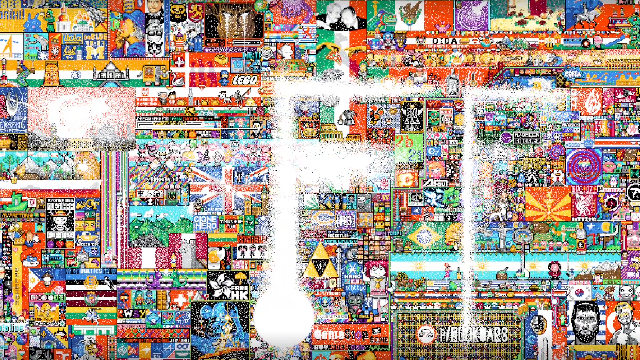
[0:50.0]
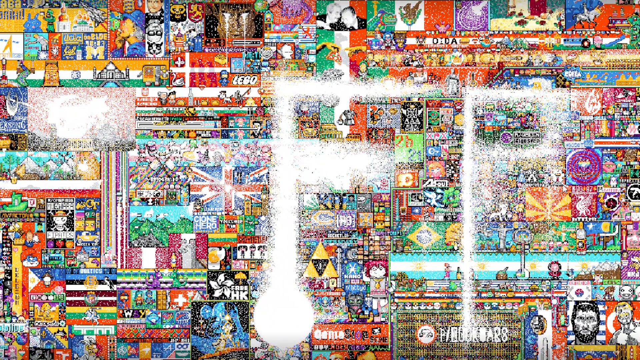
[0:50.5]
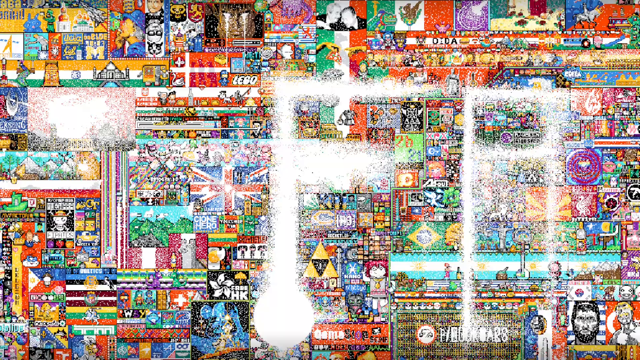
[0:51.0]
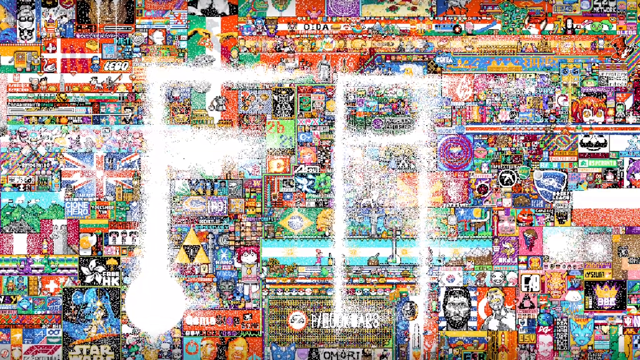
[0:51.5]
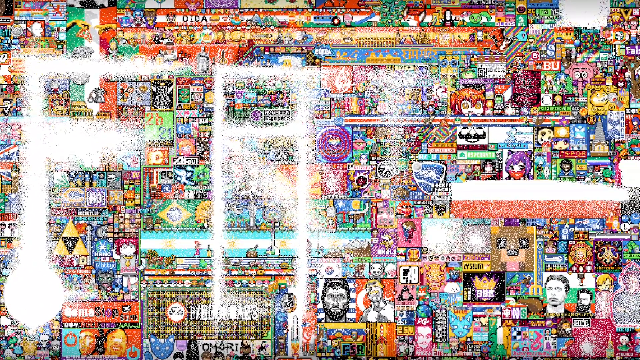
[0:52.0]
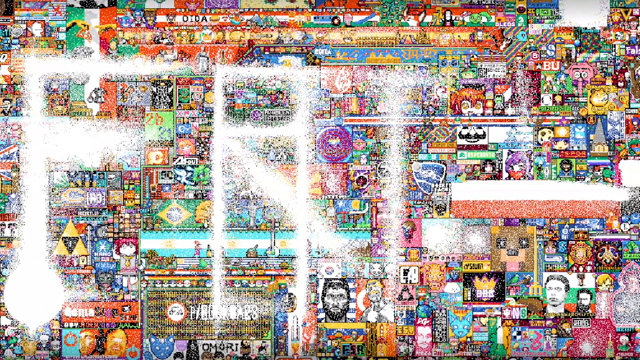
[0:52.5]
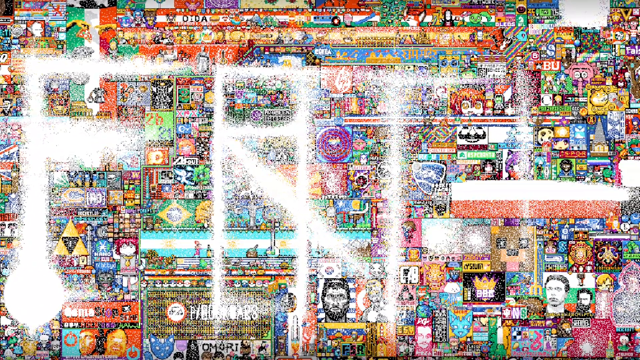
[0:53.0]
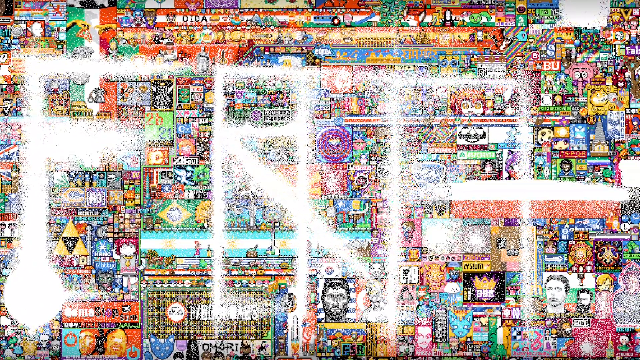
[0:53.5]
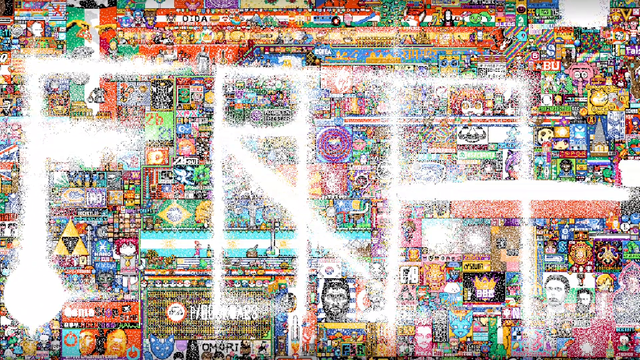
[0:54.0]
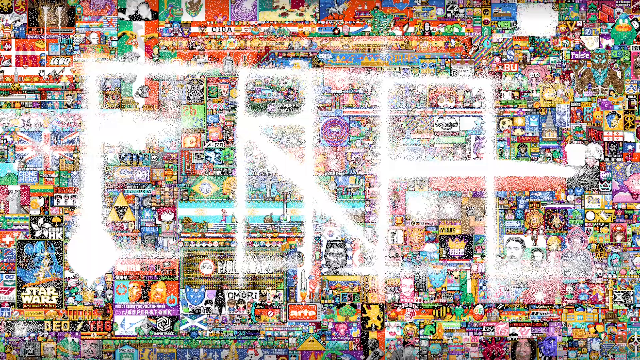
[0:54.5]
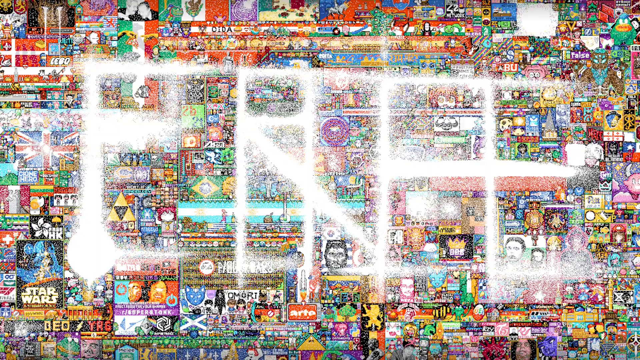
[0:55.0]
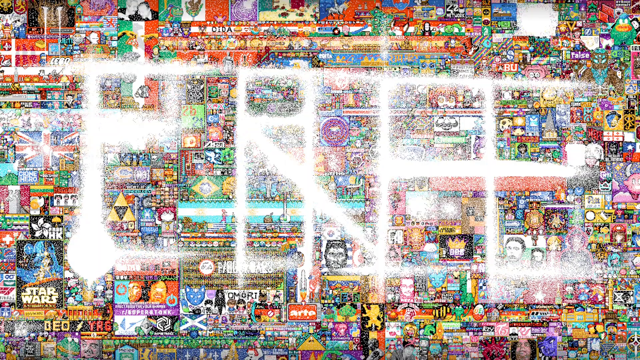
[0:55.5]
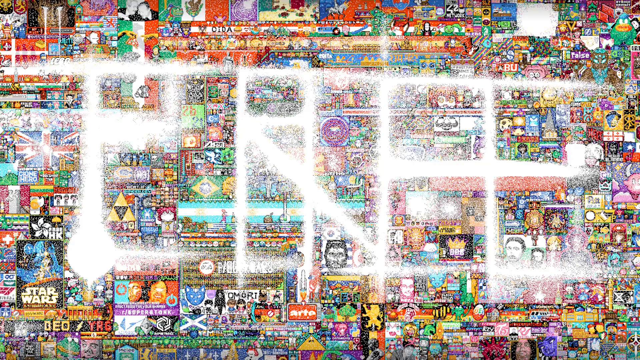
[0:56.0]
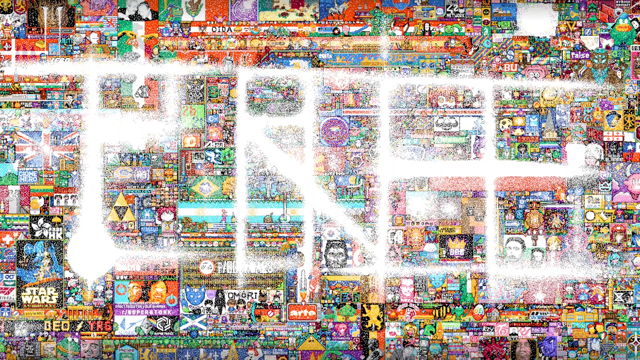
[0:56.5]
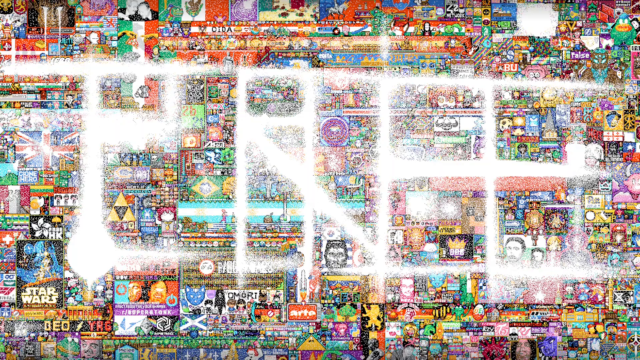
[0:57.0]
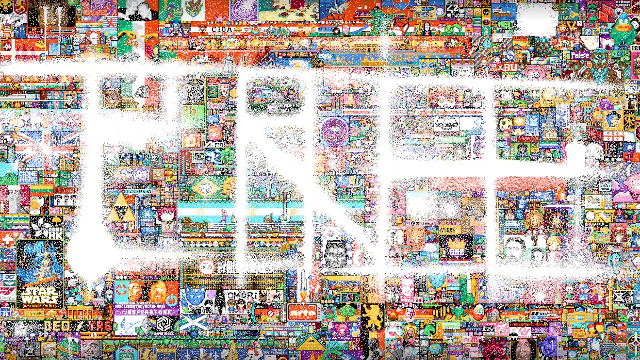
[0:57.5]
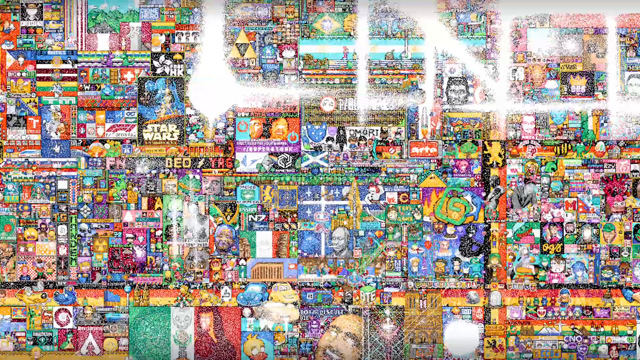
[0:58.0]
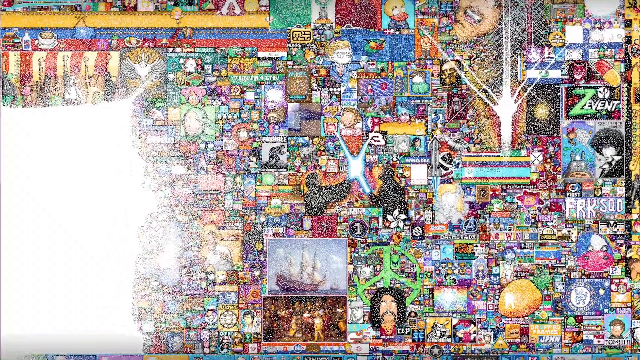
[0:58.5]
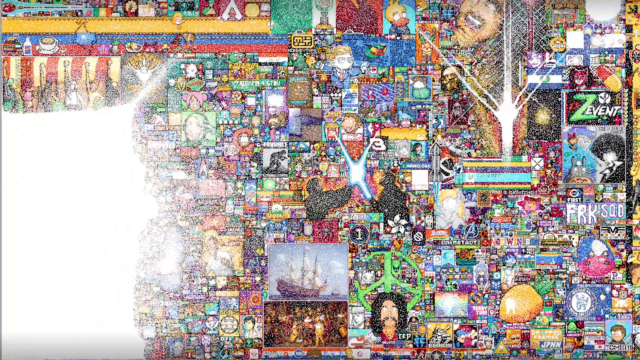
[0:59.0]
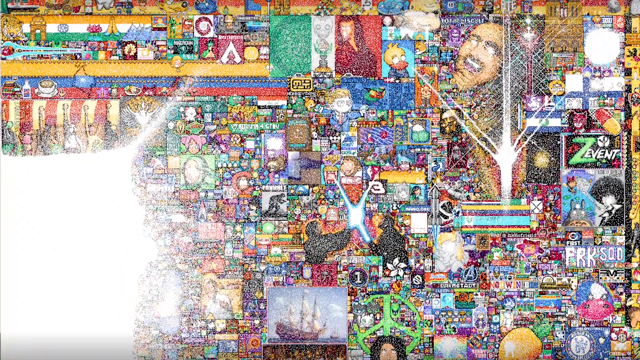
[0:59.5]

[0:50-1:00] A different section appears, featuring Lego. There is a Topgolf logo, the Greece flag, and some things disintegrating. The Italy flag appears, along with the Lego logo with Mega Man right next to it. There is the famous picture of two hands touching, like God's, but with a piece of Sicilian or Napoleon pizza. "Free Hong Kong" appears in black. A Turkish man is right next to the Greek man in the flag. The Taiwan flag and the Brazil flag are also visible.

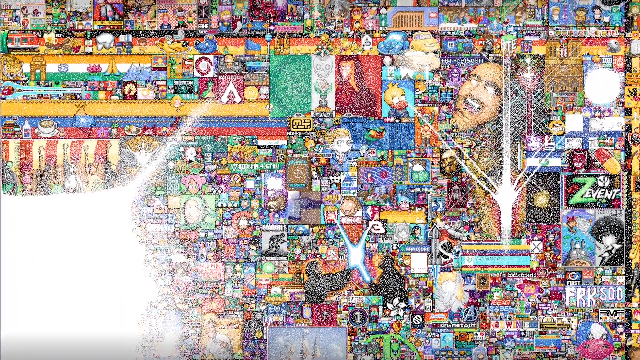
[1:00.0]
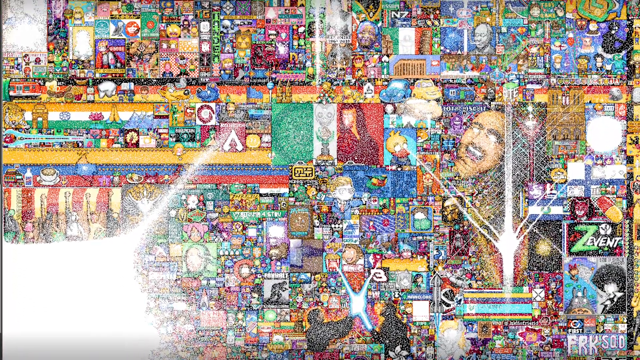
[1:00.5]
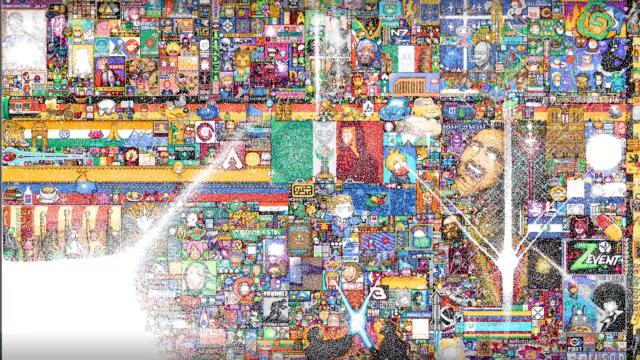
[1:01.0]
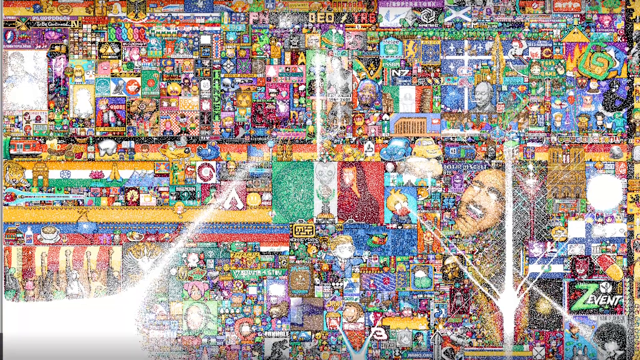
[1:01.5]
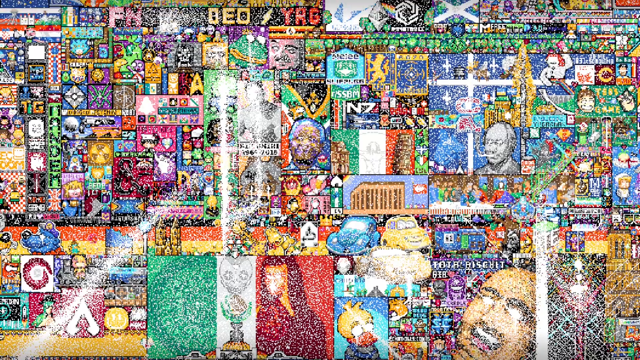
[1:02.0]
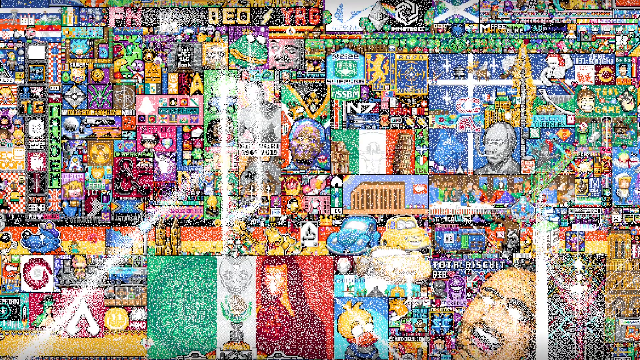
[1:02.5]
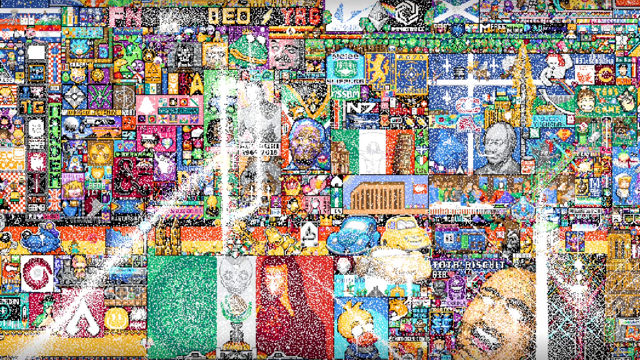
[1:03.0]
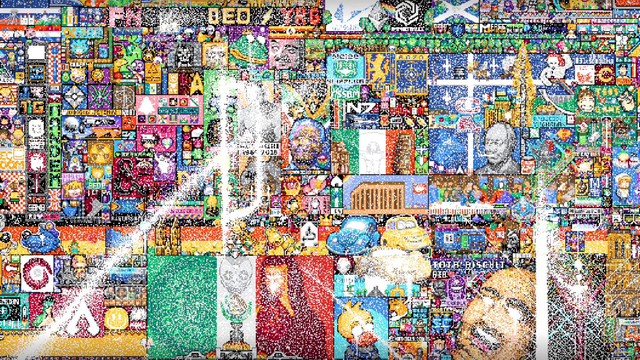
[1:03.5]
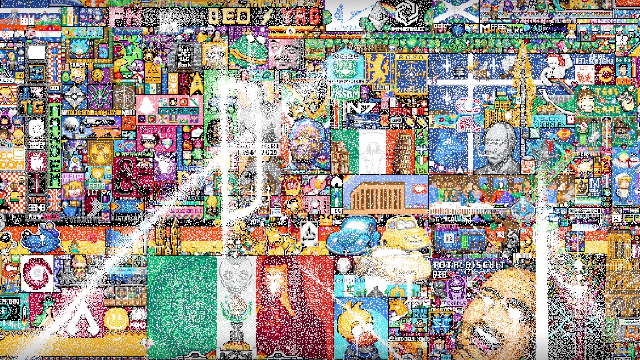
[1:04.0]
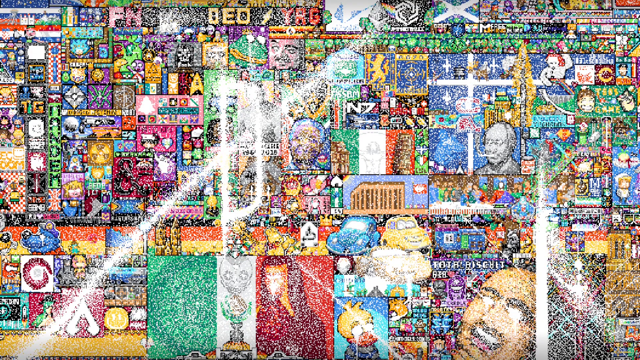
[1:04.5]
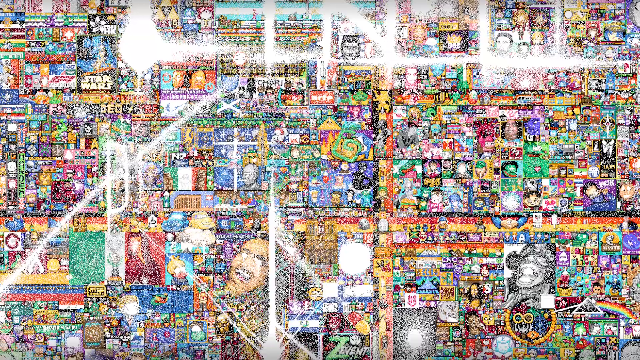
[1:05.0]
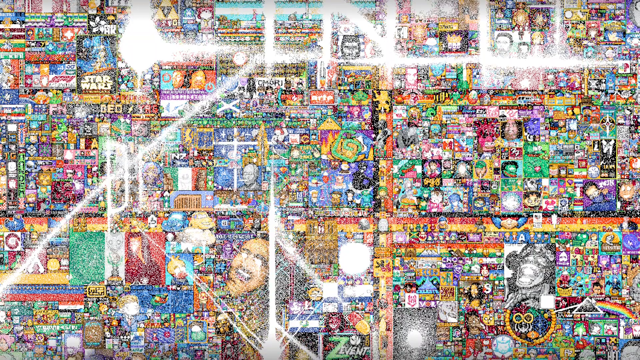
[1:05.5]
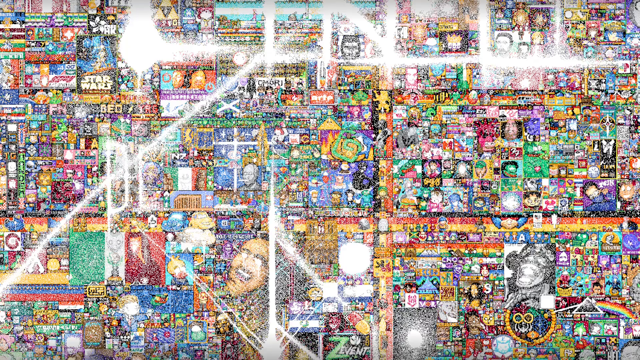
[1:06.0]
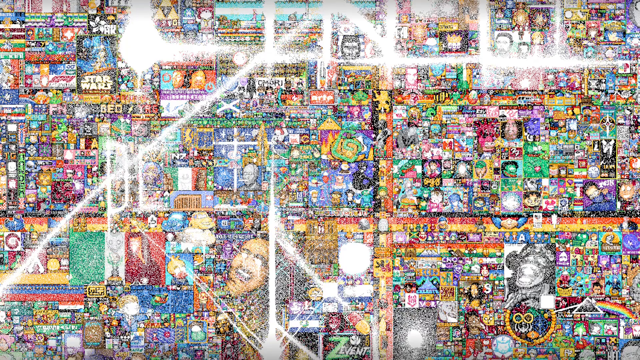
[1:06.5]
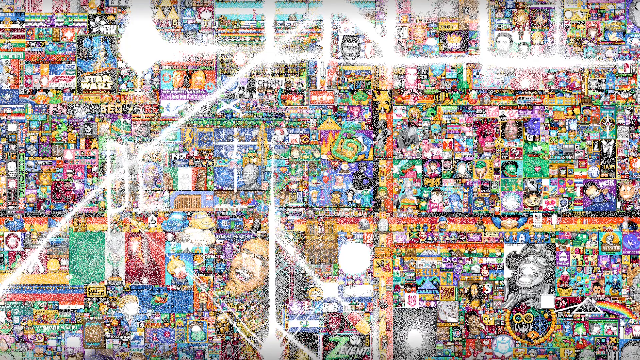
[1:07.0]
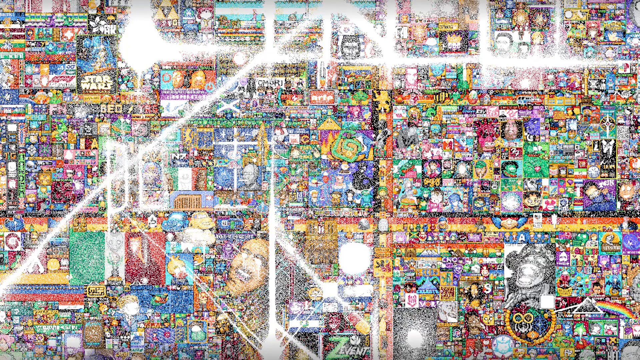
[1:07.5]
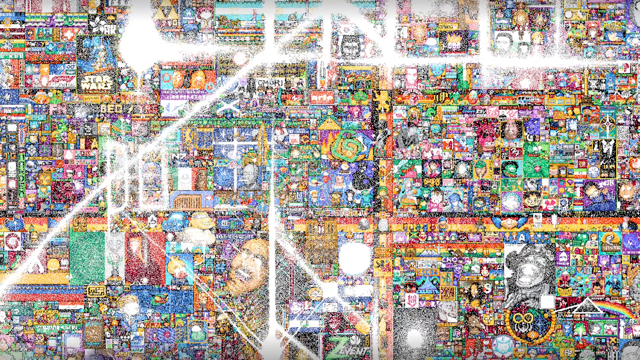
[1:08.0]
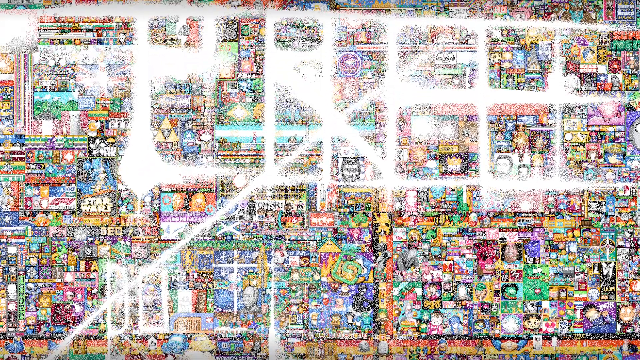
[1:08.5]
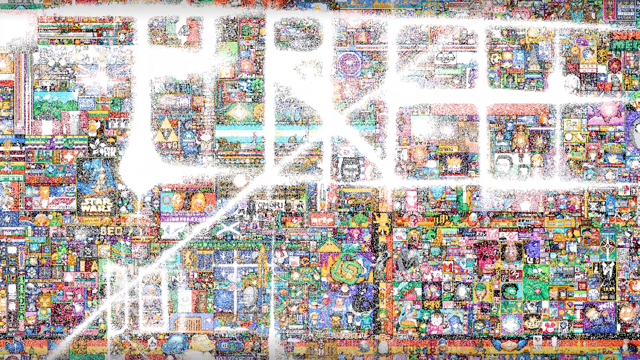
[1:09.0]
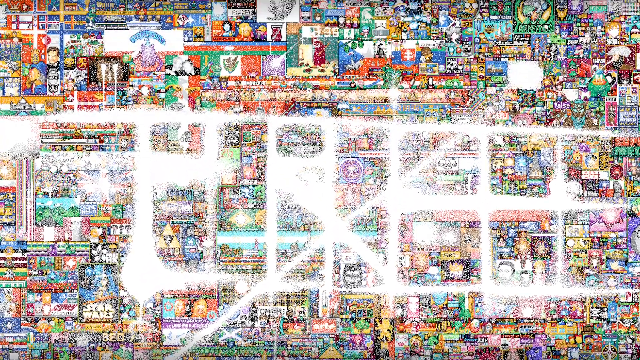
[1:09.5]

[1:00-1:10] The blue car and the yellow car from the movie Cars appear. The view is now zoomed out far enough to see everything. There is Star Wars, the Italian flag, and the r/wall street vets logo showing a guy in a suit. There is a lot of artwork, which probably relates to Reddit. There is nanq.org, a long line of the yellow, blue and red Colombia flag, the Indian flag with a peace emoji, then tiger and lily, and the German flag.